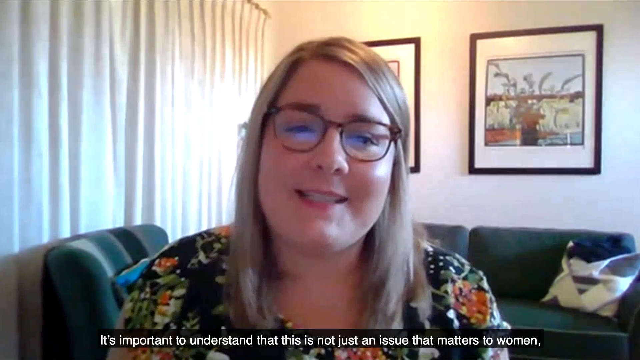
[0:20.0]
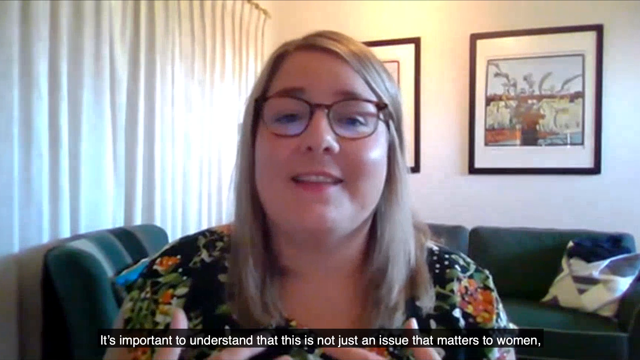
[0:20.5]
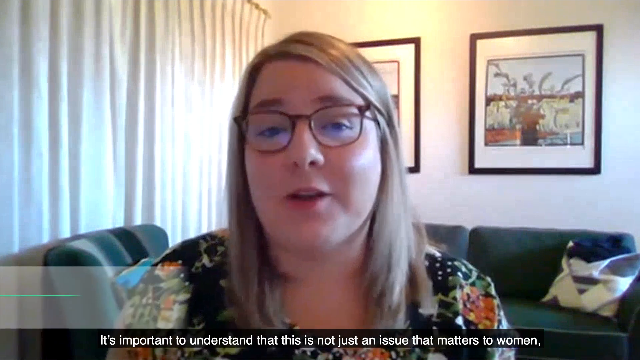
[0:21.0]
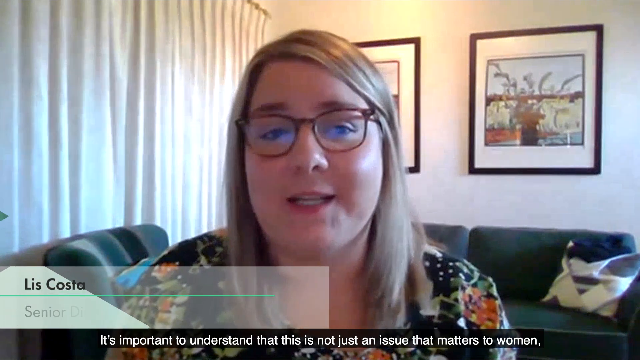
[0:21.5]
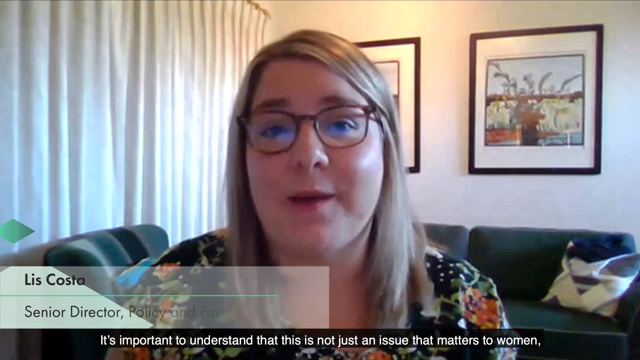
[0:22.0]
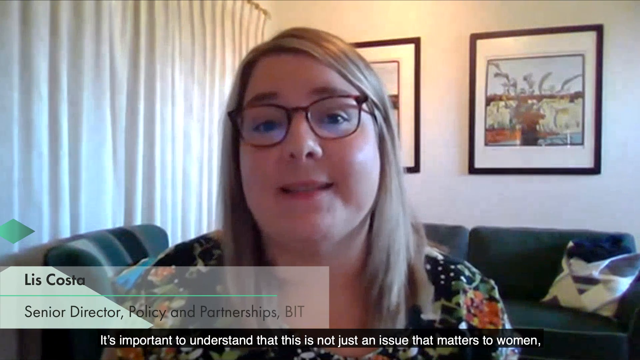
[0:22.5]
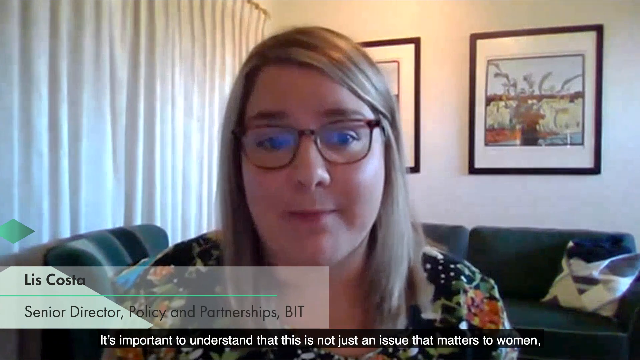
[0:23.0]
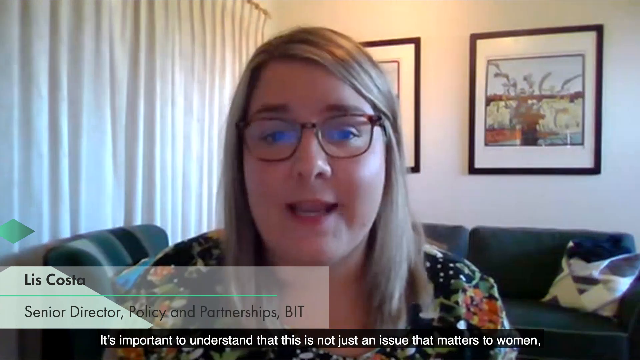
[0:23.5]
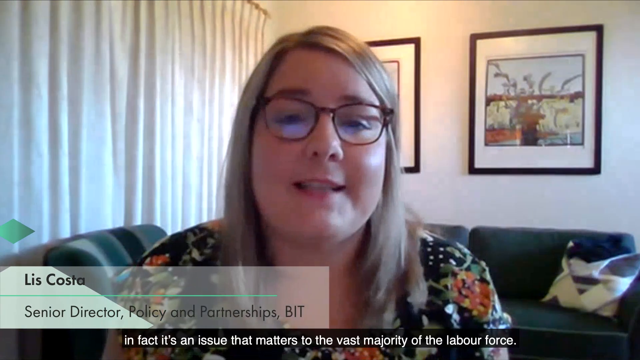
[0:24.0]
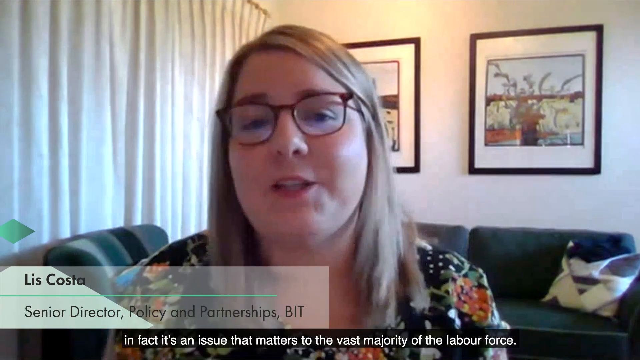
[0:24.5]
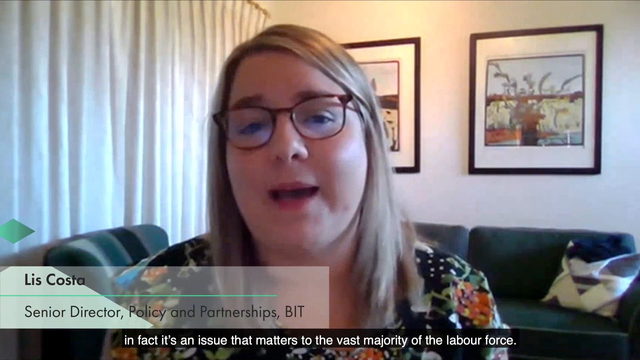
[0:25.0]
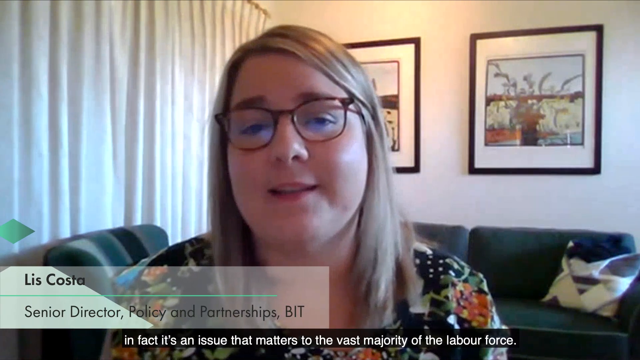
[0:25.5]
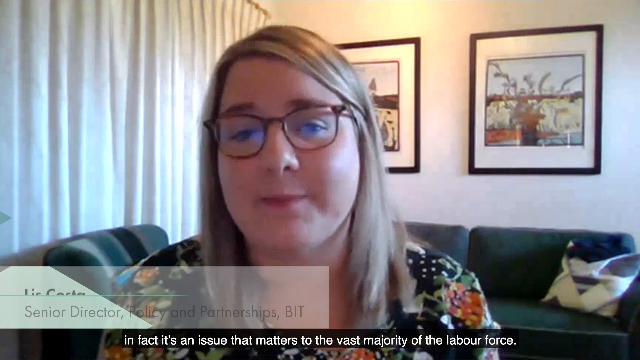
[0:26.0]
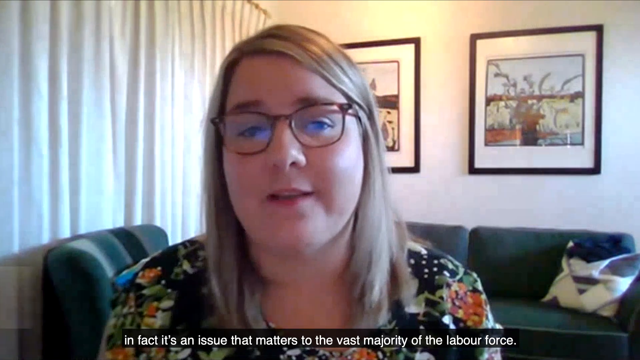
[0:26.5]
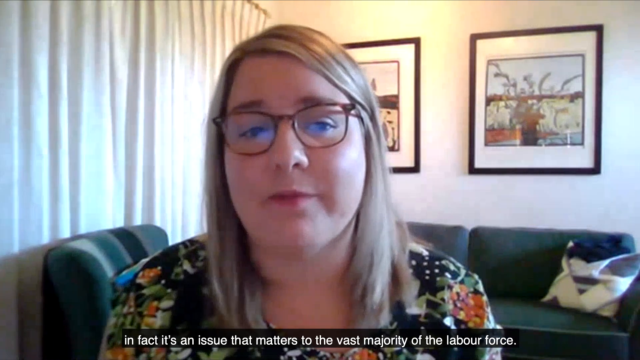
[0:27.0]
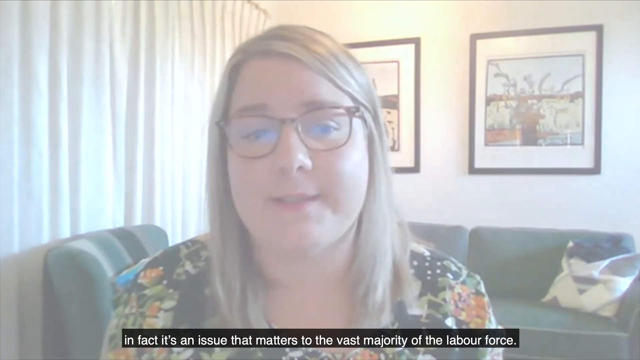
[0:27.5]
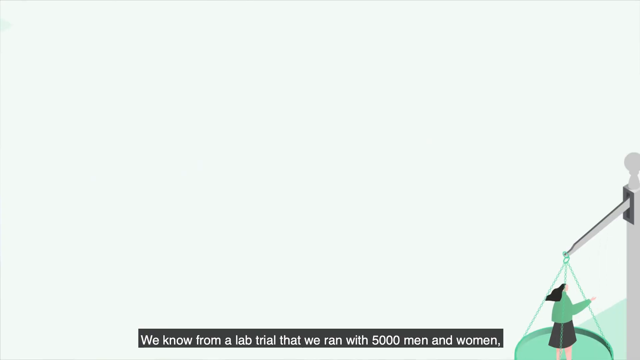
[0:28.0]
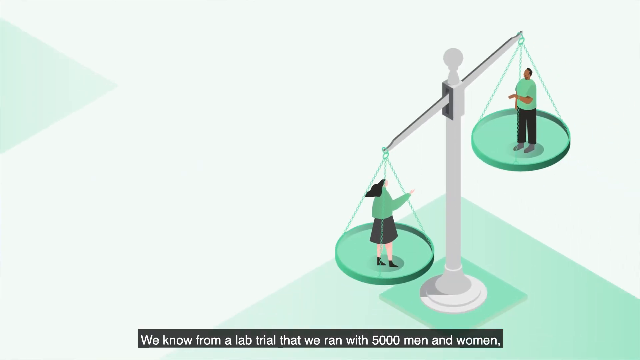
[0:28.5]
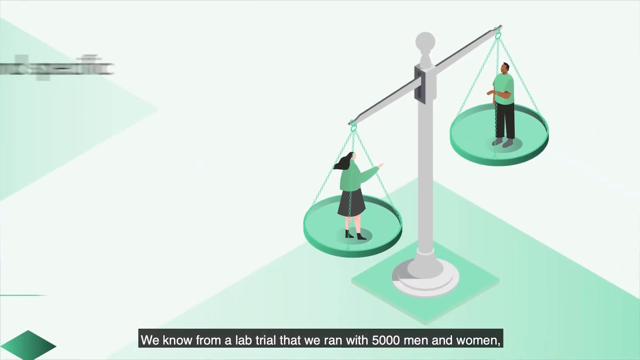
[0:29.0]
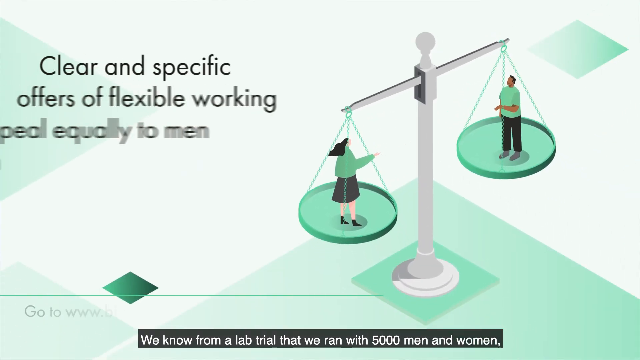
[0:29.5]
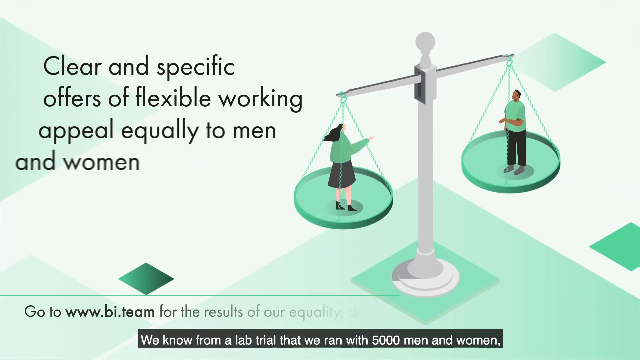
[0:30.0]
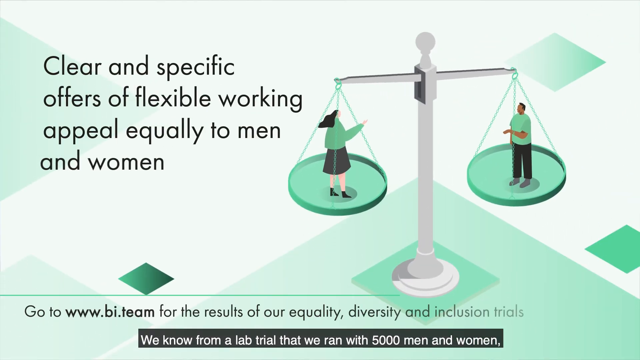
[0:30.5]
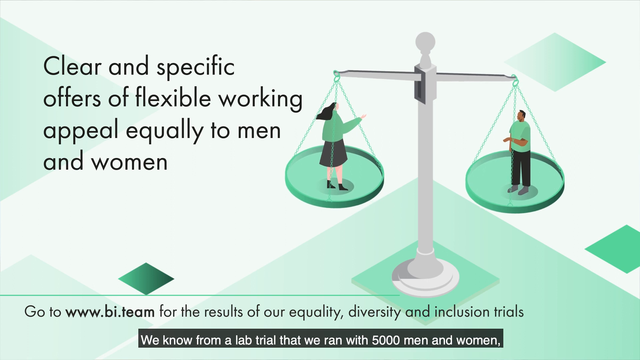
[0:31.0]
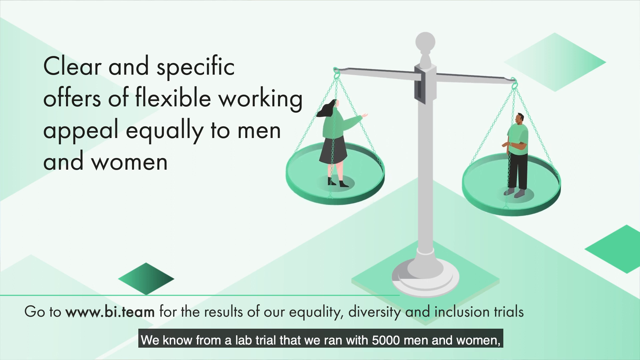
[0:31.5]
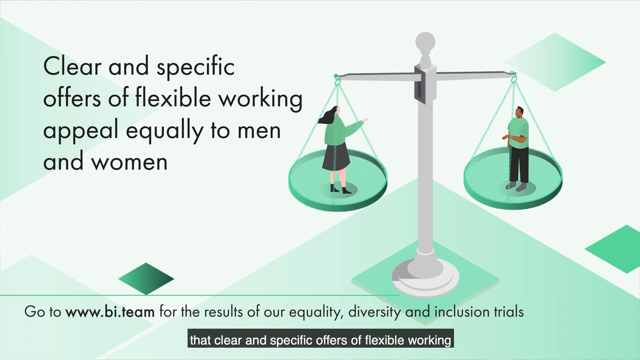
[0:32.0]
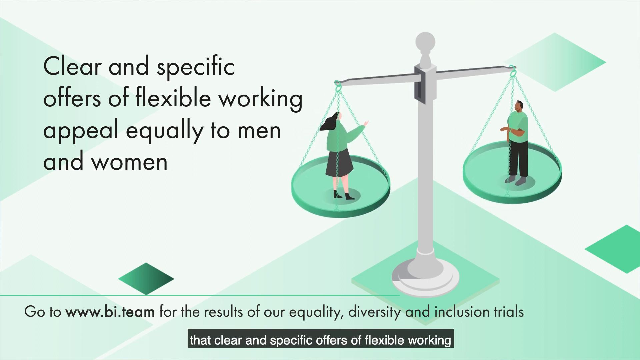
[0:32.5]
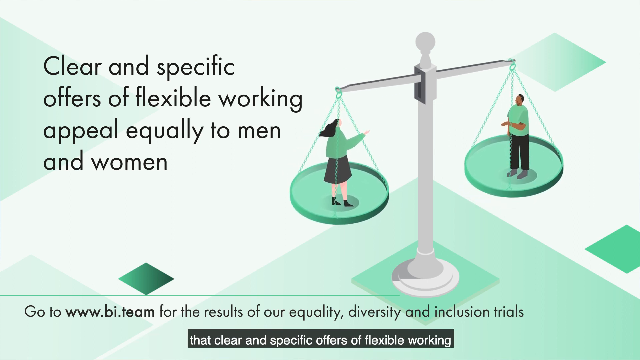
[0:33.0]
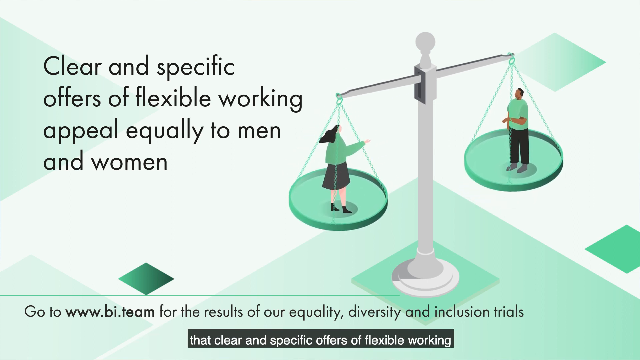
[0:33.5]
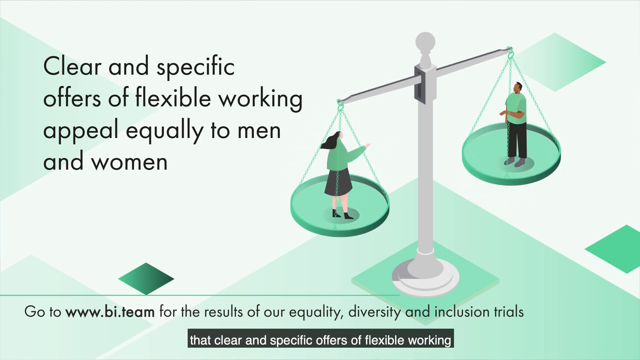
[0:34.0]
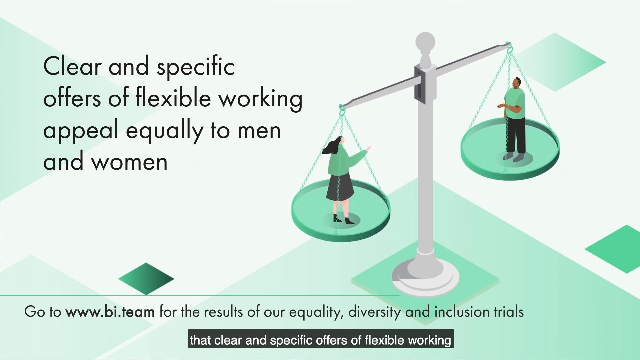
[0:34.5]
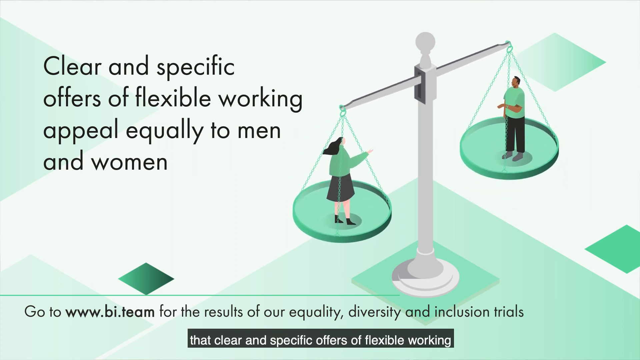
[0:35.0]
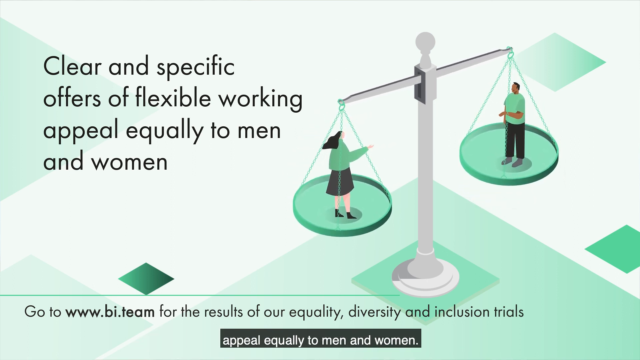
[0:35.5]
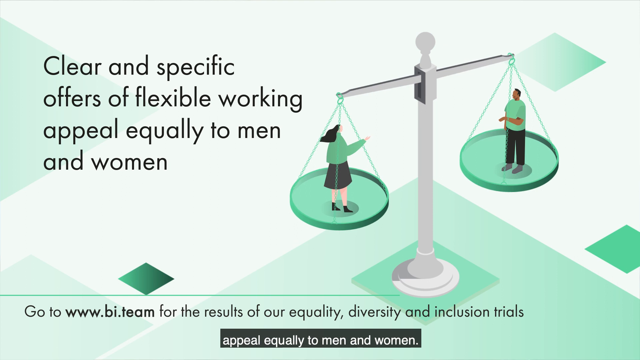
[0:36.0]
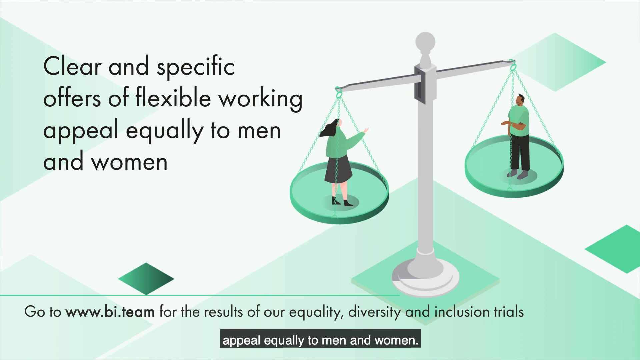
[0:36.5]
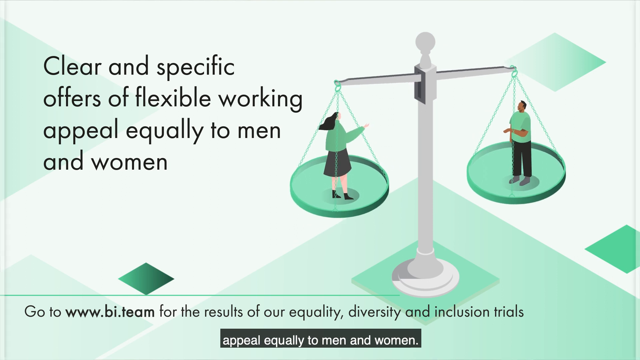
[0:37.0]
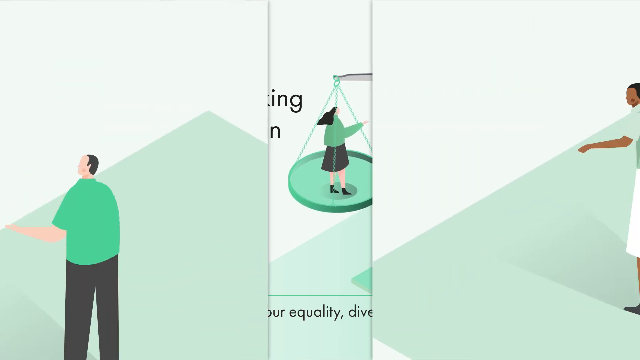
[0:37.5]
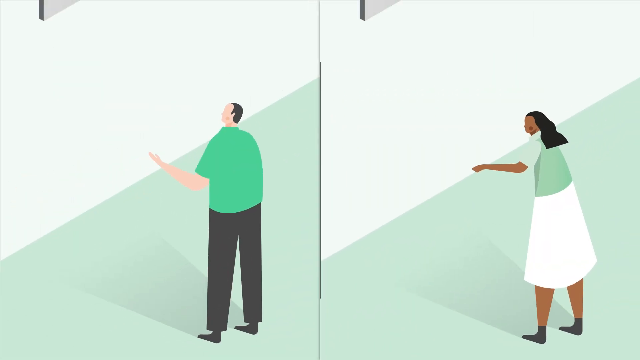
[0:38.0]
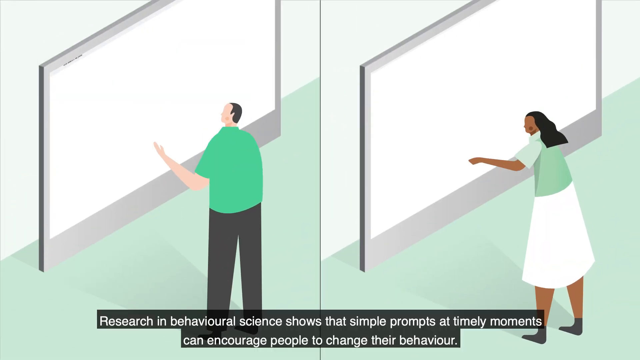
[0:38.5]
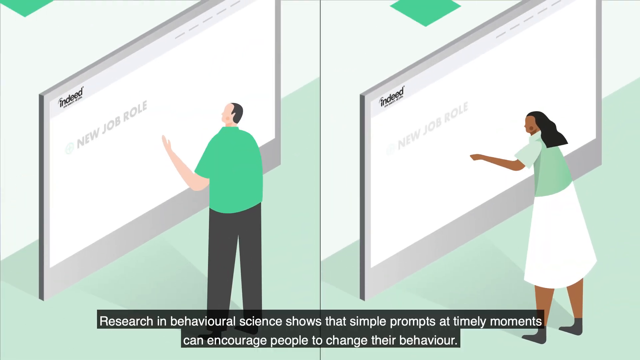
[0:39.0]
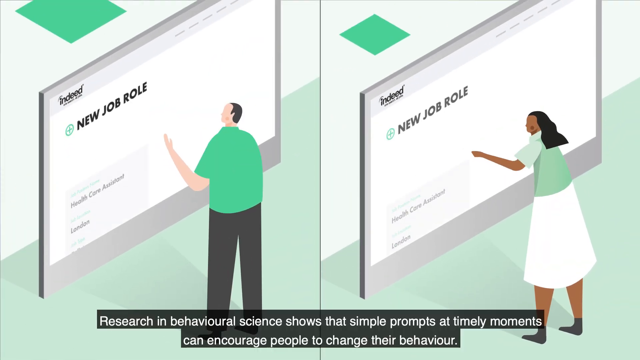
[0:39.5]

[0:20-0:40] A blonde woman with brown glasses and a floral shirt is in the center of the frame, talking. Behind her are a couch and other furniture, drawn curtains and photographs on the wall. Her name comes up on the left: "Lis Costa, Senior Director of Policy and Partnerships, BIT." Captions run along the bottom as she speaks: "it's important to understand this is not just an issue that matters to women. It is in fact it's an issue that matters to the vast majority of the labor force." Graphics follow: a woman in a green shirt and a skirt stands on a scale, and on the other side of the scale is a man in a green shirt and black pants. The caption at the bottom reads "we know from a lab trial that we ran with 5,000 men and women that offered clear specific offers of flexible working." Black text comes up on the left: "Clear and specific offers of flexible working appeal equally to men and women," while the caption continues at the bottom. More graphics appear: on the left a man in a green shirt by a digital board, and on the right a woman in a white or mint green shirt by a digital board. The text reads "research and behavioral science shows simple prompts at timely moments can encourage people to change their behavior." Simulated fake screens then come up.